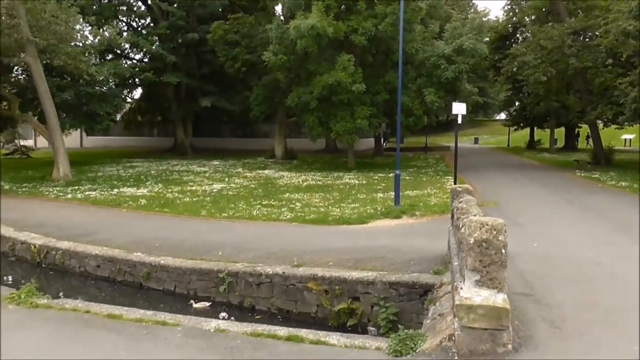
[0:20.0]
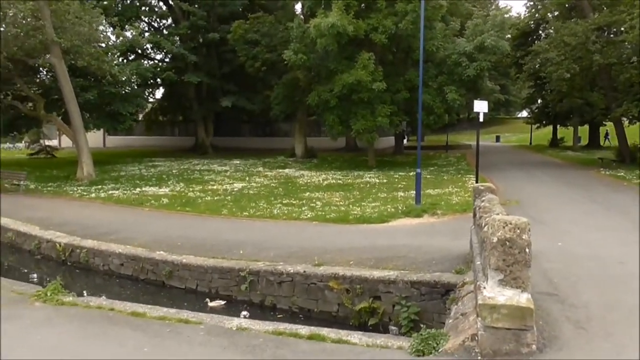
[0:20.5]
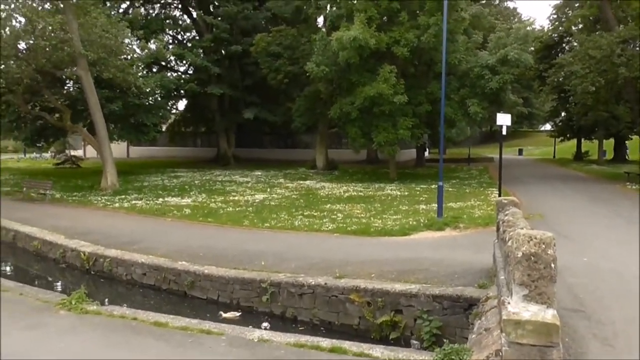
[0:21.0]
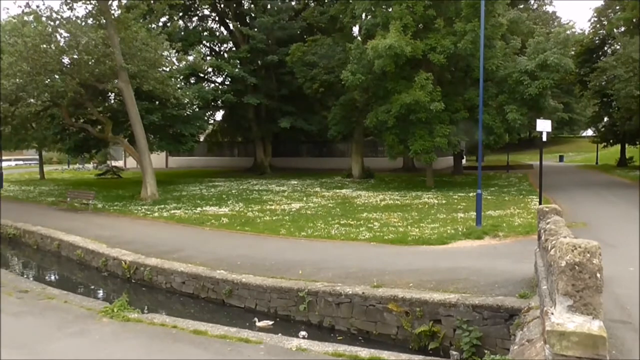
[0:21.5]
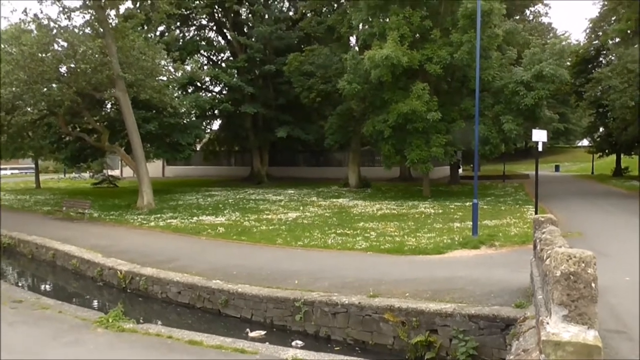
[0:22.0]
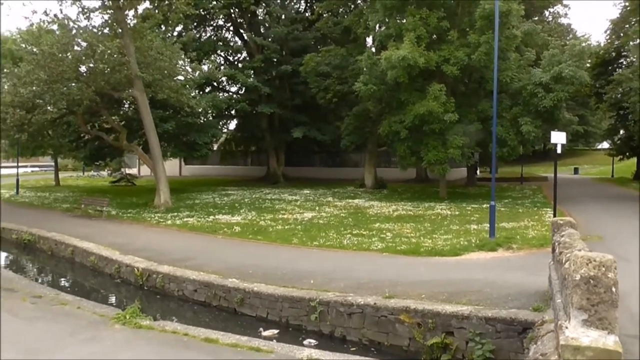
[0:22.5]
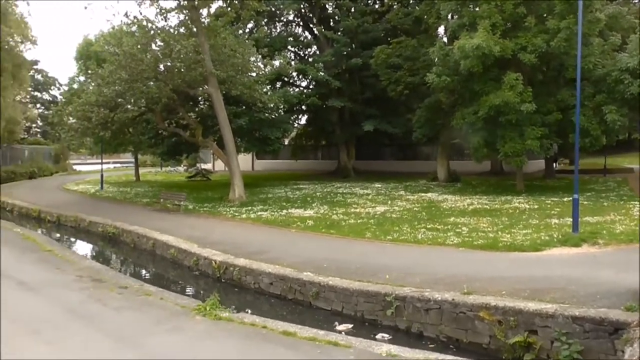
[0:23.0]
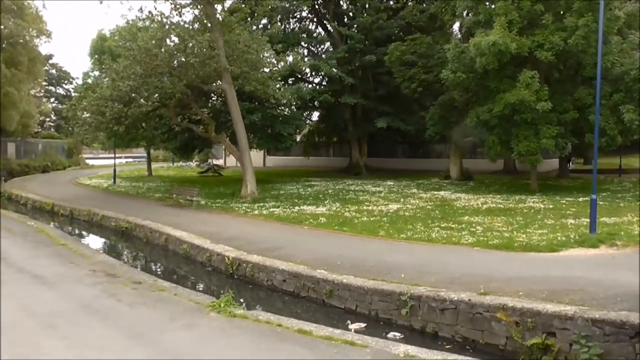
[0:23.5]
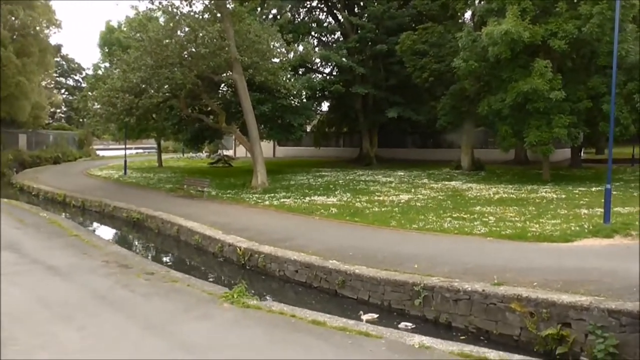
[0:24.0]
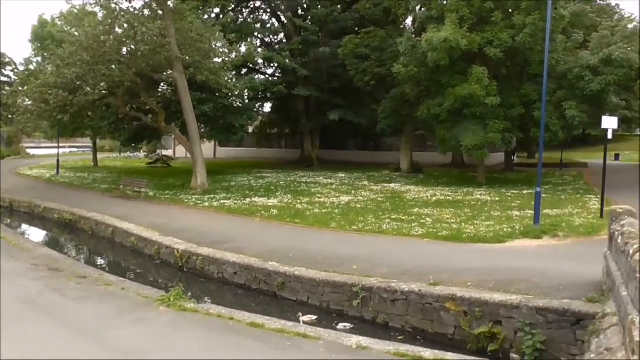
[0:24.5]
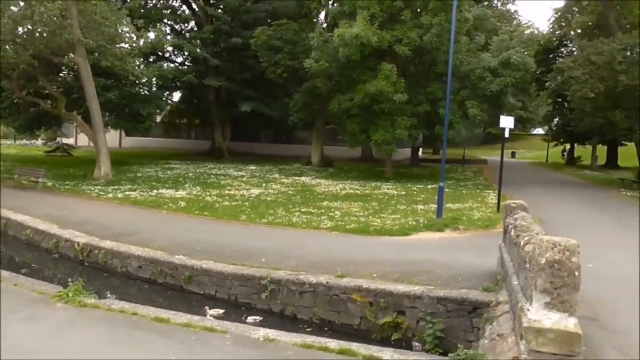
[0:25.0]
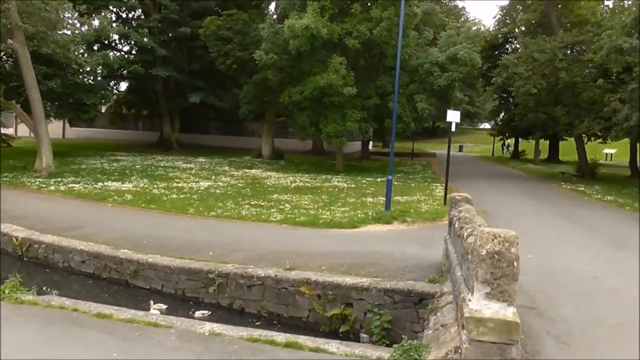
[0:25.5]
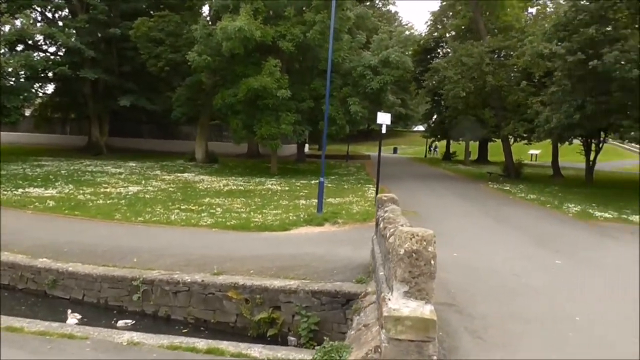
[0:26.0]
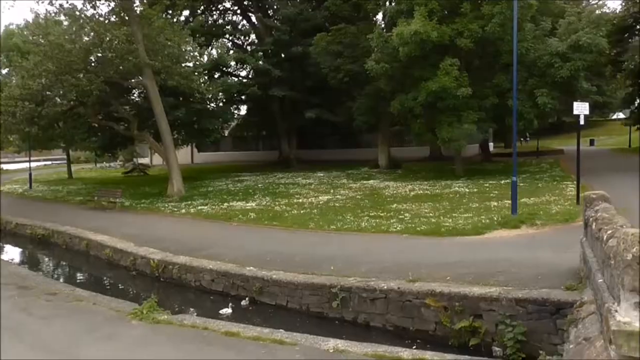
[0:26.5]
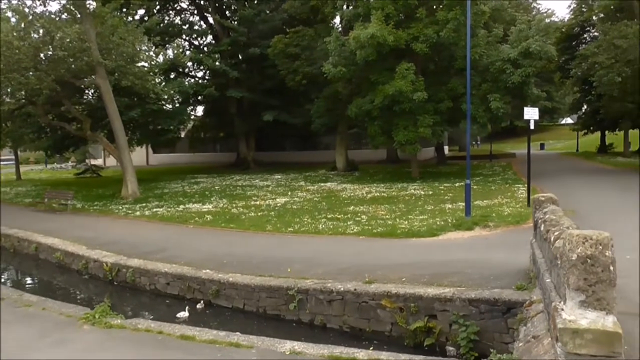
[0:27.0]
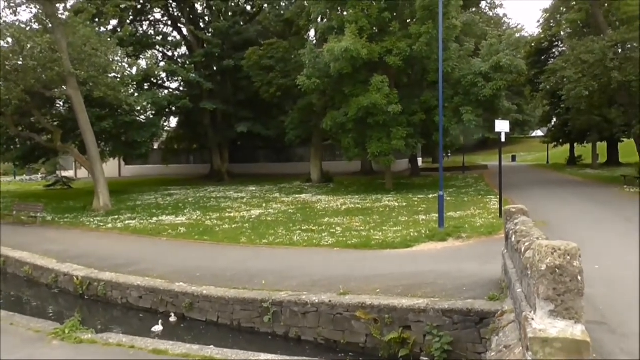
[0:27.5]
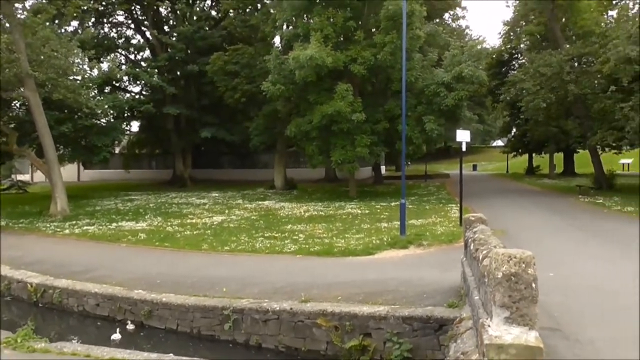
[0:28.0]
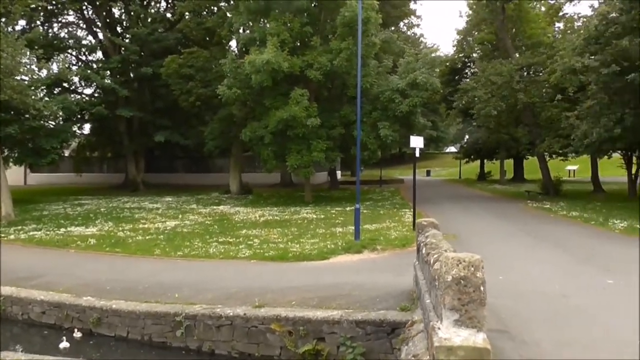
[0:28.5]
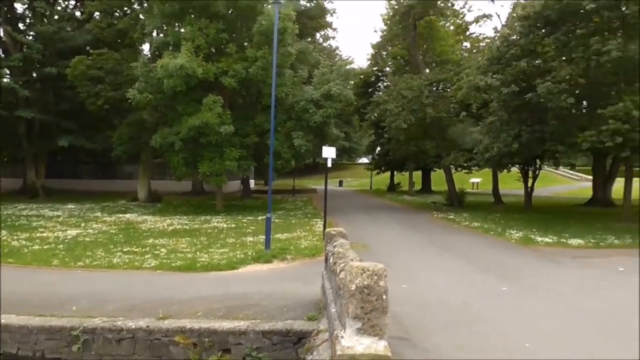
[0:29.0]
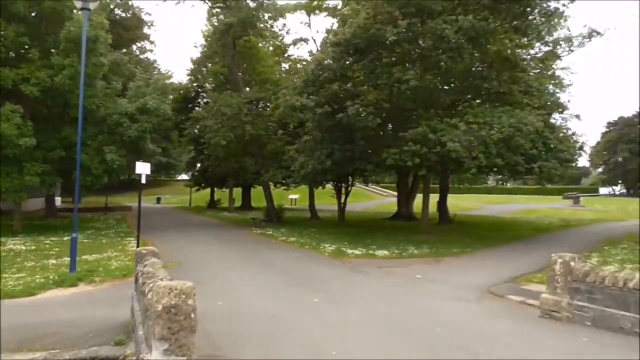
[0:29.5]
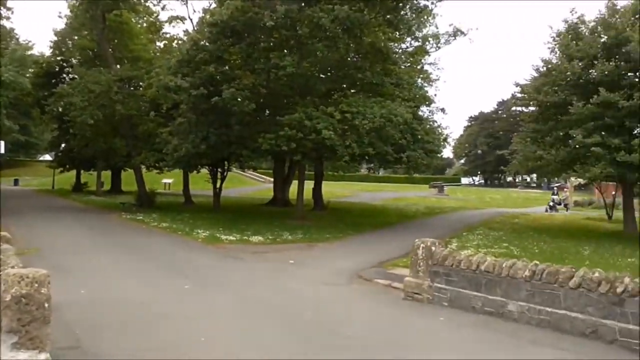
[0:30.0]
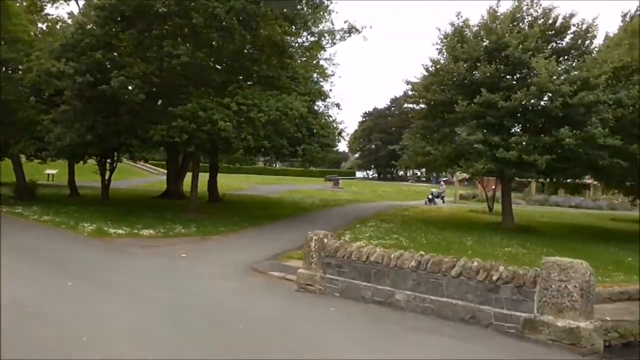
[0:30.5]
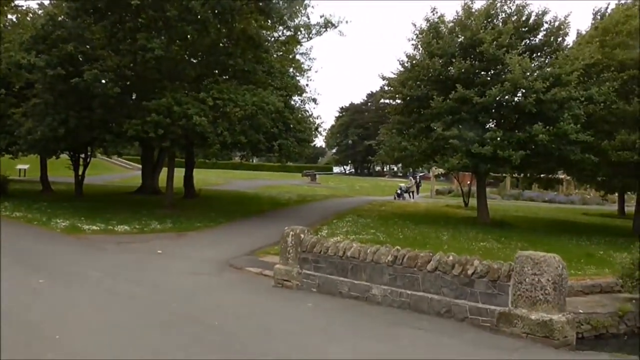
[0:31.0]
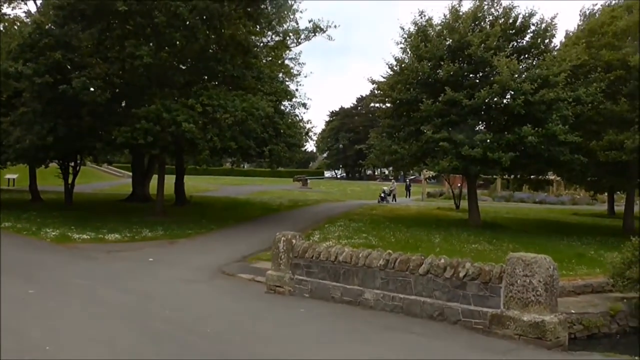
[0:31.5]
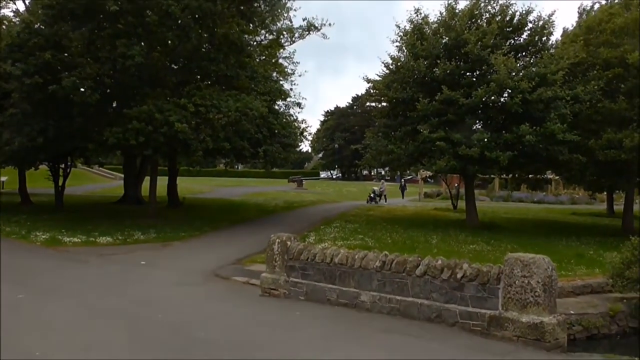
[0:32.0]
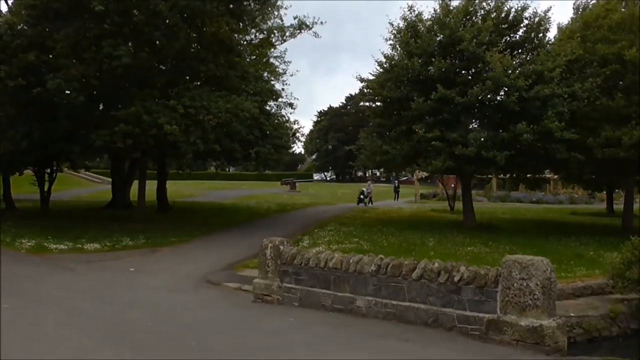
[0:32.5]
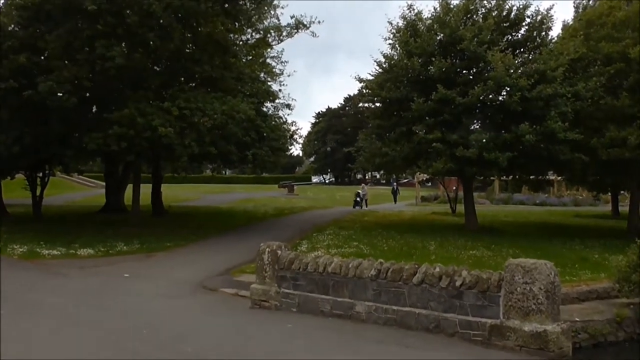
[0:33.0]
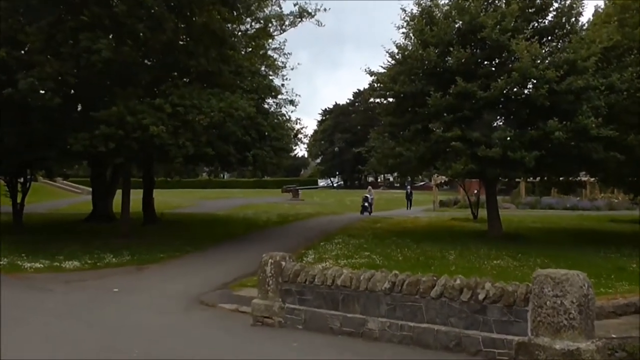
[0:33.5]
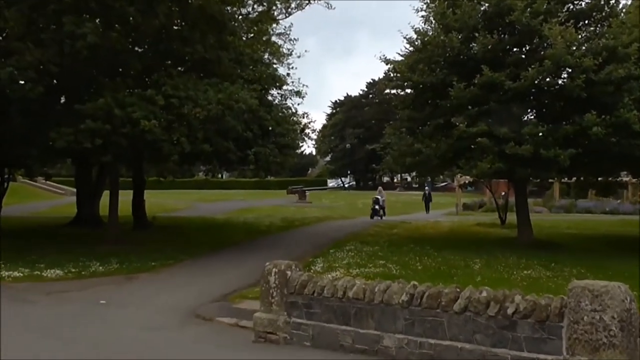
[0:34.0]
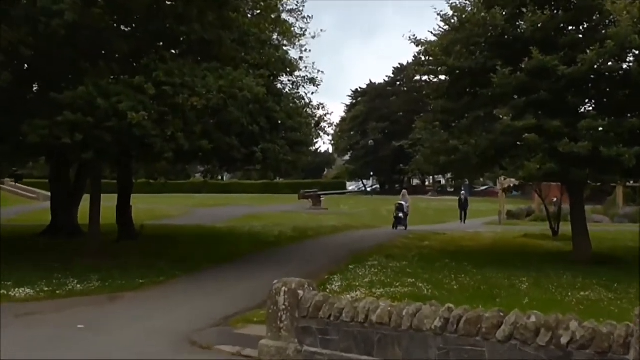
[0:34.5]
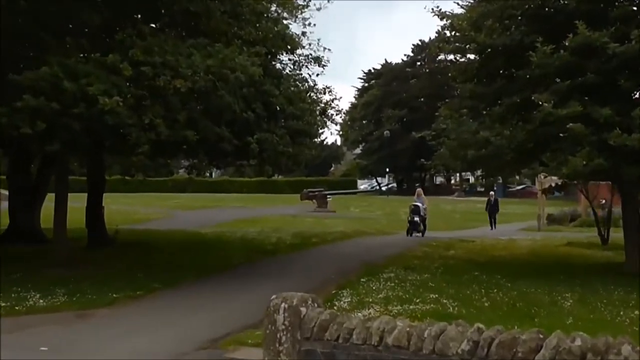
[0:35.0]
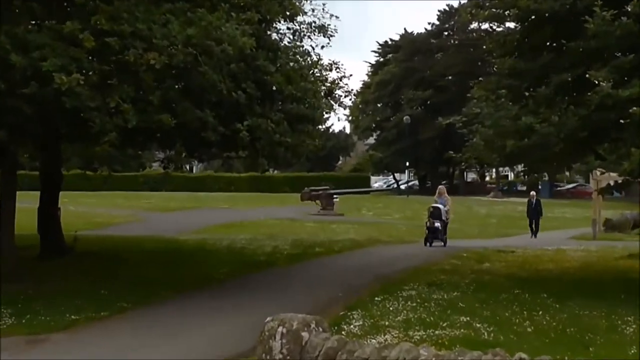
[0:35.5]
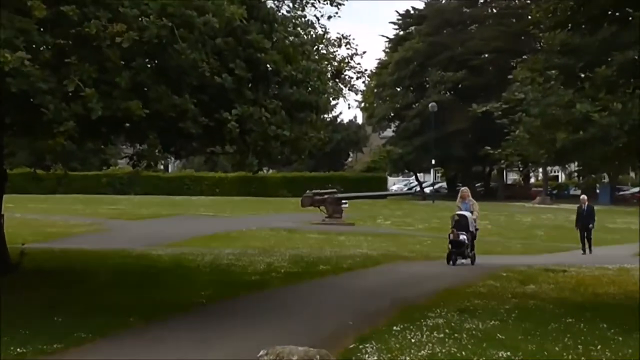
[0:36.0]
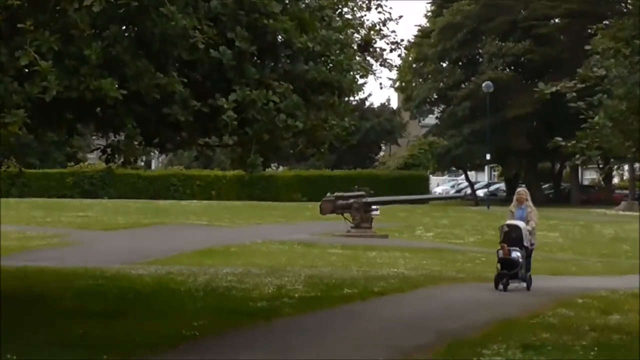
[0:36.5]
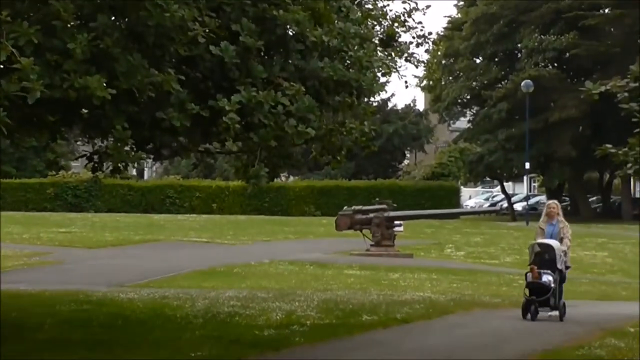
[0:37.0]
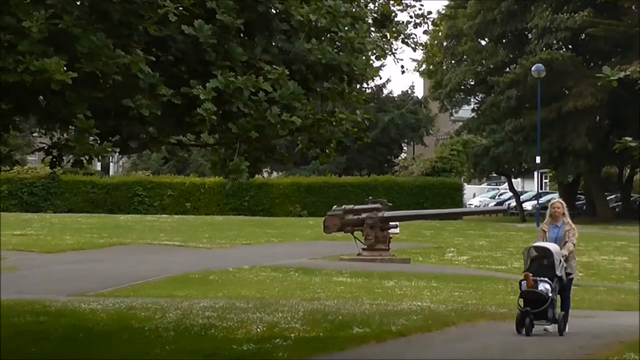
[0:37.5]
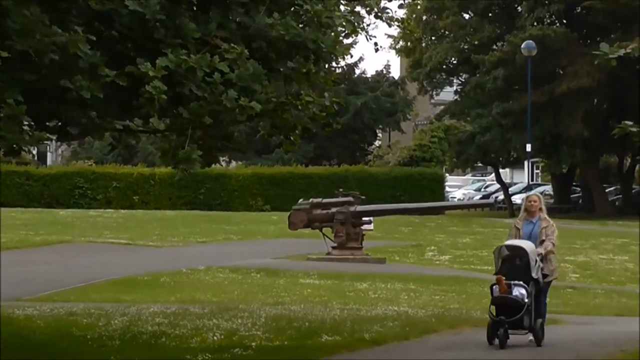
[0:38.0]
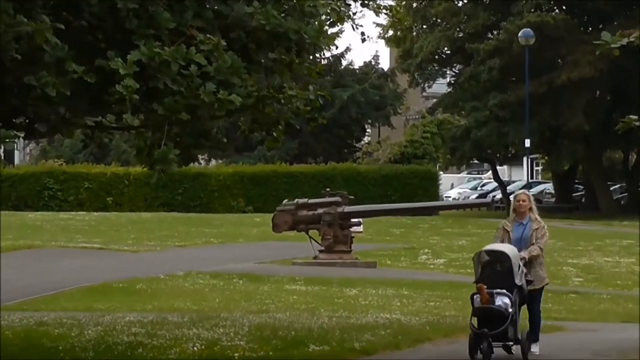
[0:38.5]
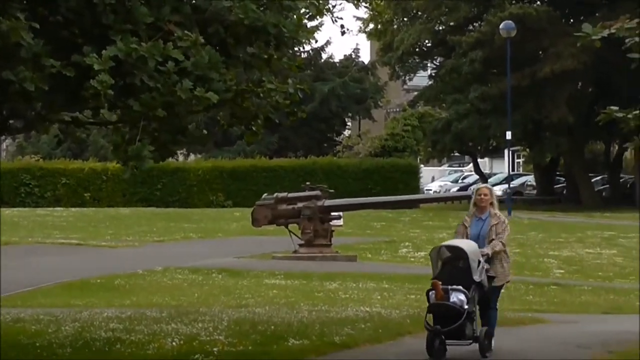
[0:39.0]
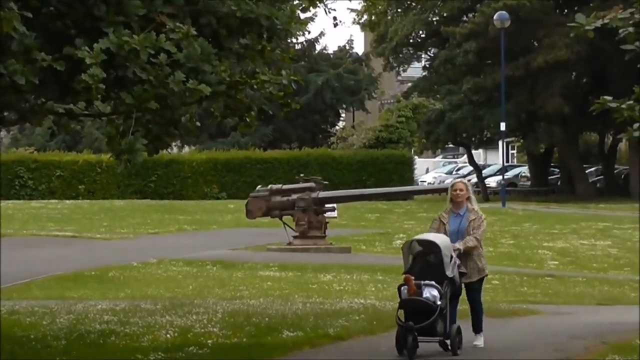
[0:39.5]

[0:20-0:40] The filming of the outdoor park continues. A small stream has stone walls on either side, with two ducks swimming on the left side of the stream and a walkway running along it. Beyond the walkway is a patch of grass with many white wildflowers and quite a few trees. The stone wall of a bridge crosses the stream, and one walkway leads straight ahead while another branches off to the right. There are other patches of grass and many trees in the area. The camera pans to the right, showing a low stone wall that is part of a bridge, and beyond it people walking on a pathway. The camera zooms into a blonde-haired woman pushing a baby carriage down one of the walkways, and as she passes, an artillery gun on display in the middle of the park is visible in the background.